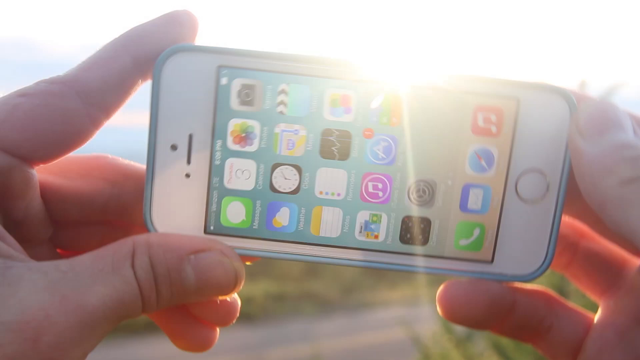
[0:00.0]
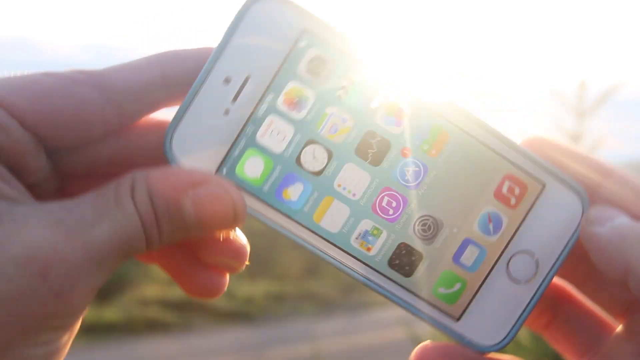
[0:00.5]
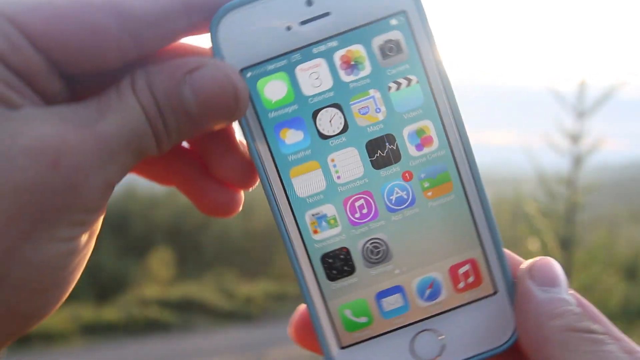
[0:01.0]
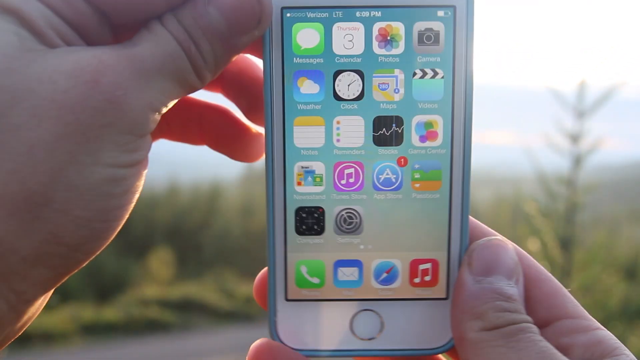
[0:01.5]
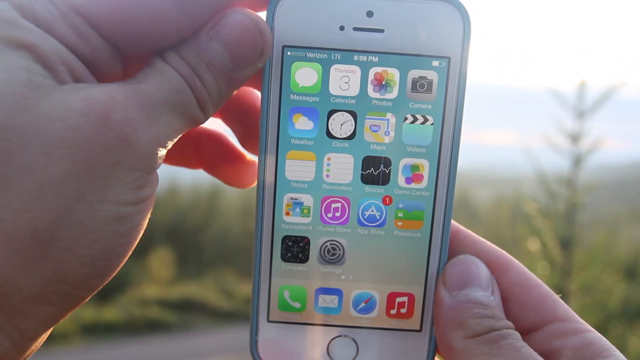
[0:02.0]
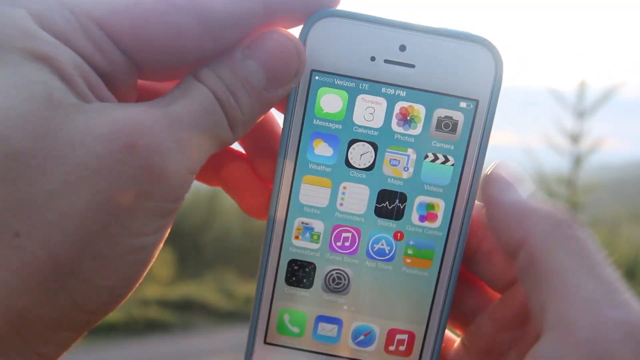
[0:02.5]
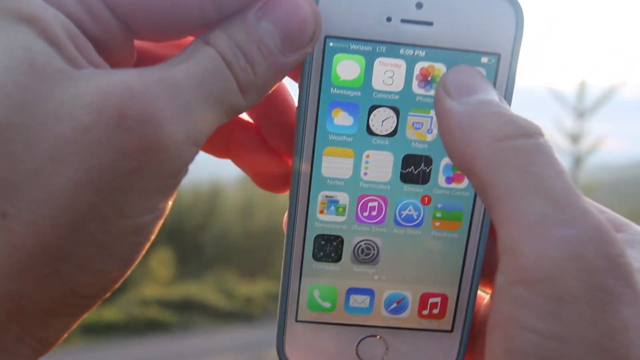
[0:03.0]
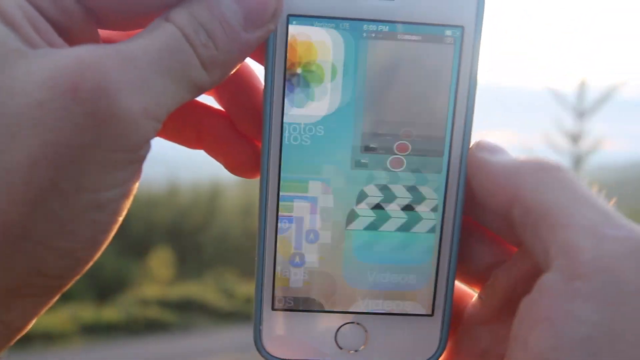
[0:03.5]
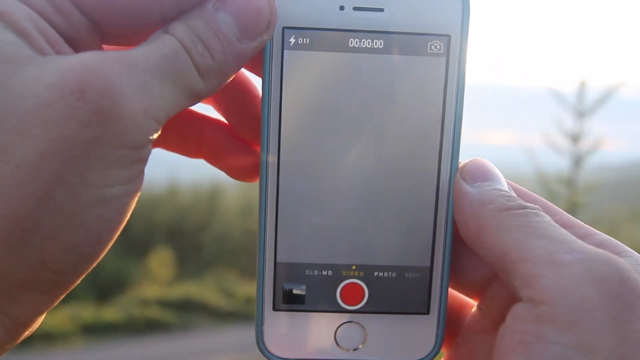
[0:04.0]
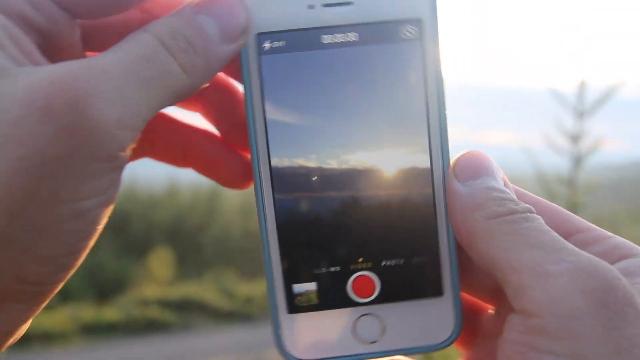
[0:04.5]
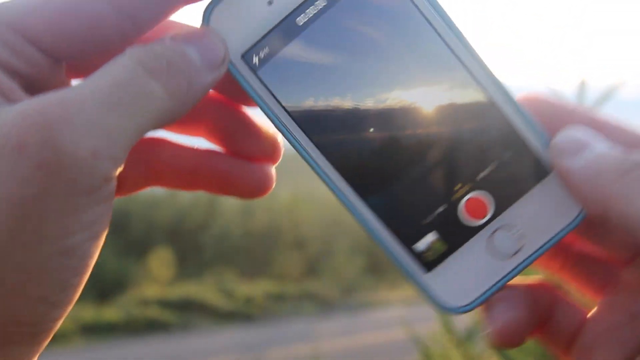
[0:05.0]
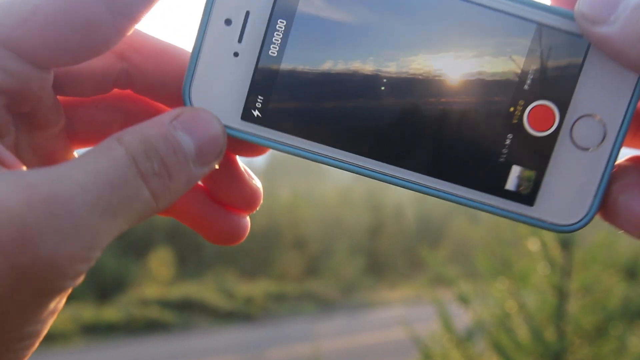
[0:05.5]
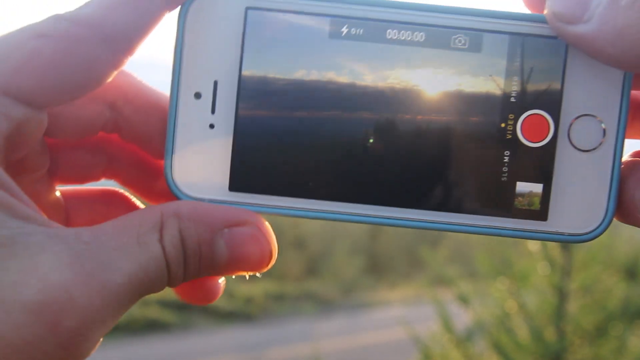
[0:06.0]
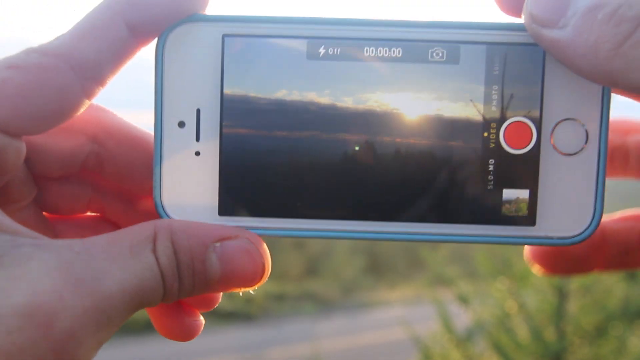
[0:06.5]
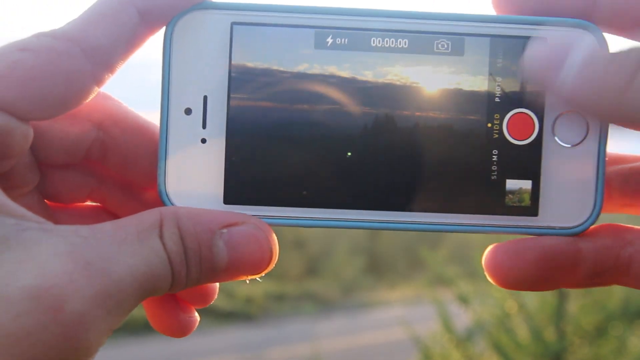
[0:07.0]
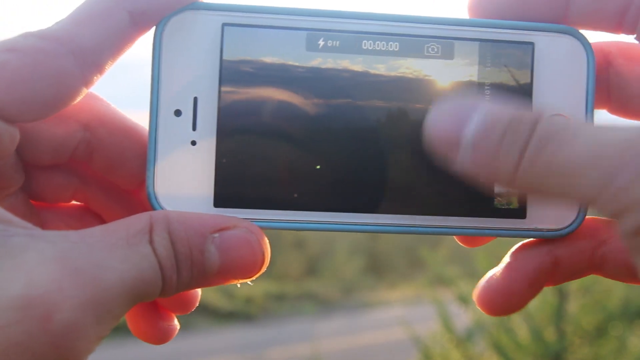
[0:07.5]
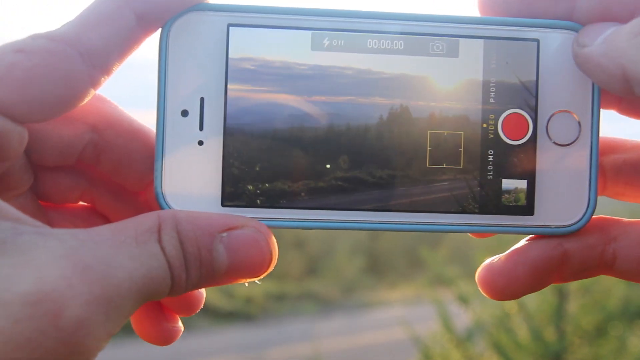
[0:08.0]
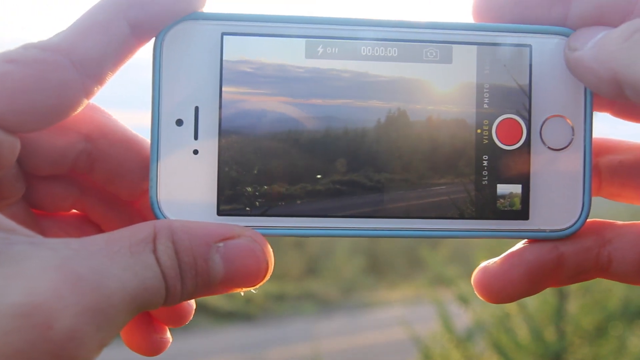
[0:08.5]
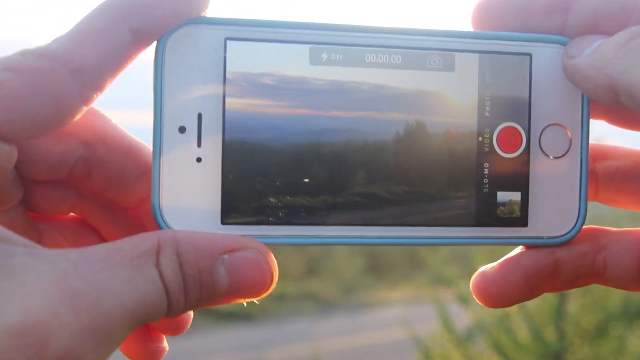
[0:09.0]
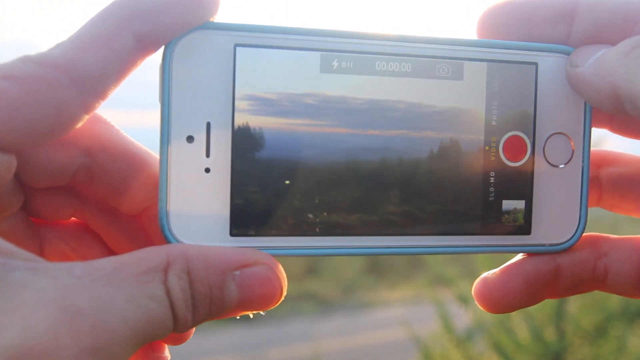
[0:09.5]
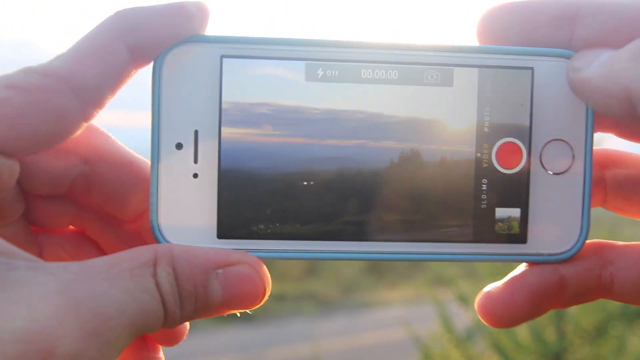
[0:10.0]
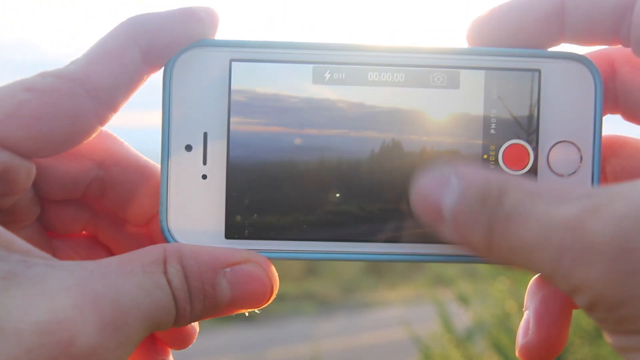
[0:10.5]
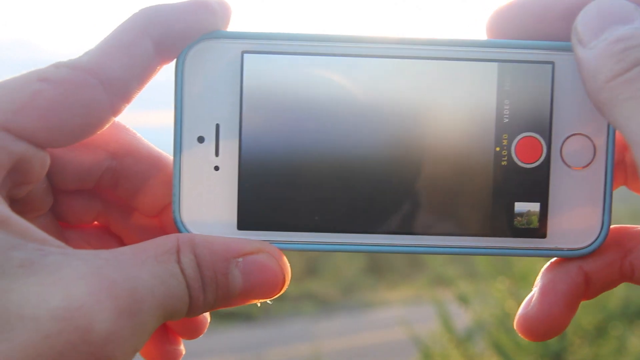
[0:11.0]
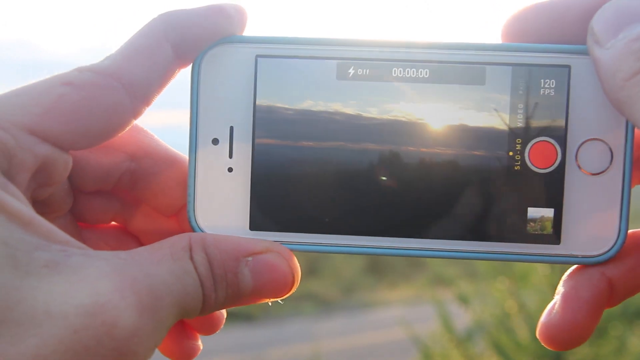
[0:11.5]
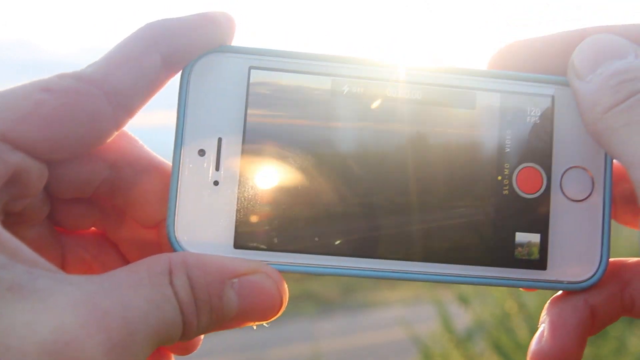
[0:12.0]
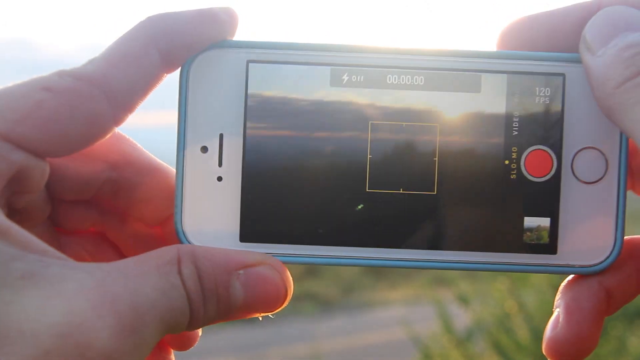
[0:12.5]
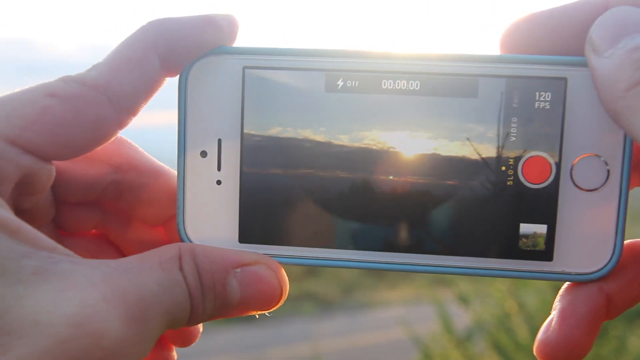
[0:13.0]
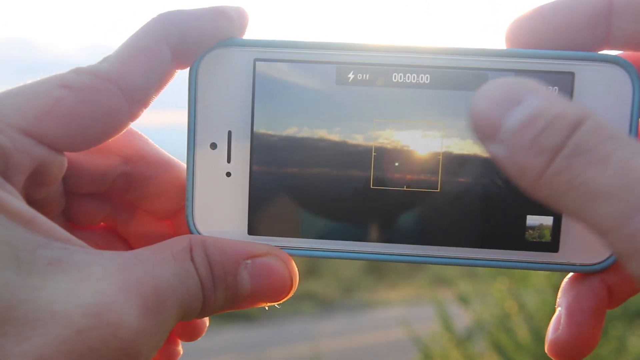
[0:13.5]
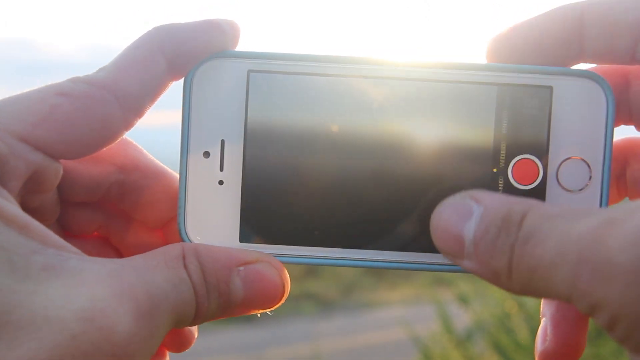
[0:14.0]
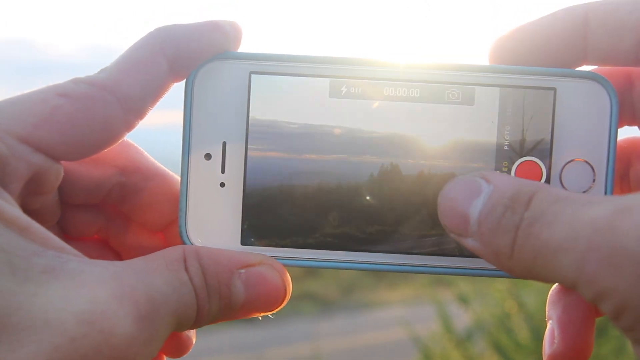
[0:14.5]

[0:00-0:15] Someone takes a photo of a mountaintop with a phone, holding it first in regular view and then dropping it to landscape view. He taps it a few times, pans it a few times, scrolls up, apparently to change some settings, and also scrolls down before the shot cuts. He then makes the video vertical and turns the phone to the left. The scene appears to be a mountainside sunset in front of a highway, with some water in the distance and some green foliage, apparently before the water. He has white hands, and he scrolls through a few options before reaching the one he wants, doing two upswipes and then a downswipe. After another cut, a highway is visible much closer, right in front of him, with some green foliage near the bottom right of the frame.